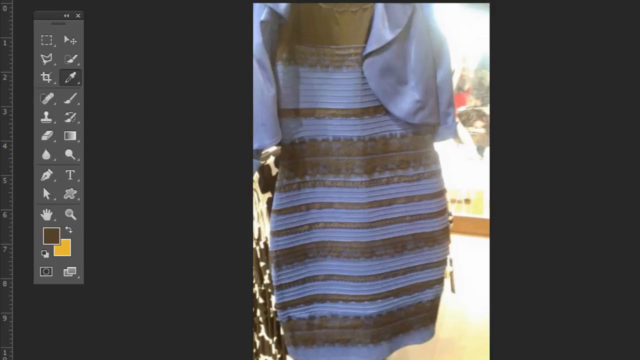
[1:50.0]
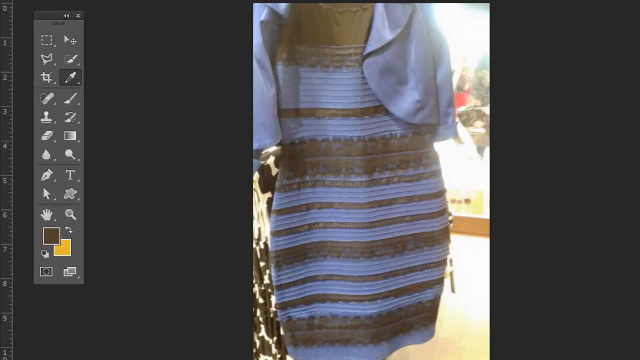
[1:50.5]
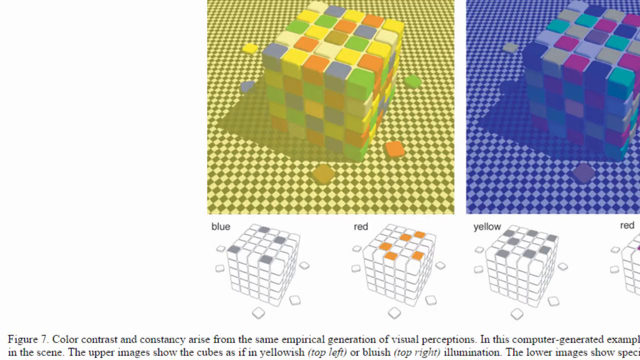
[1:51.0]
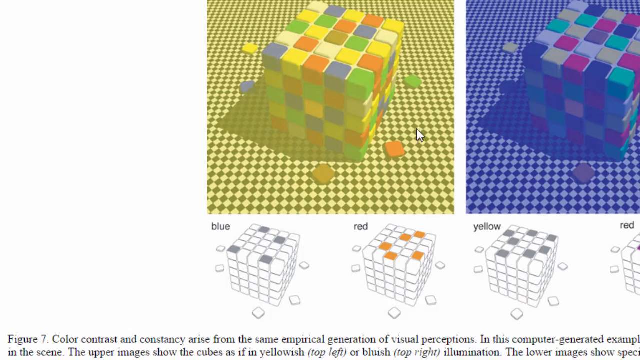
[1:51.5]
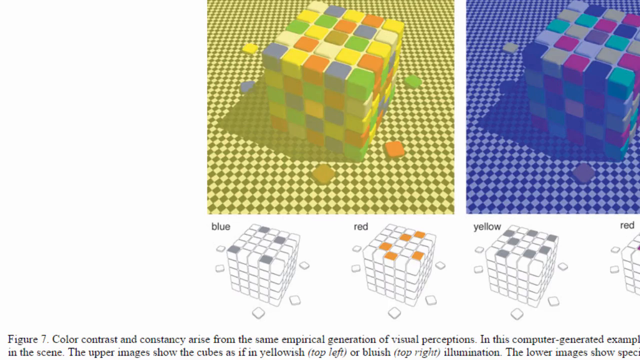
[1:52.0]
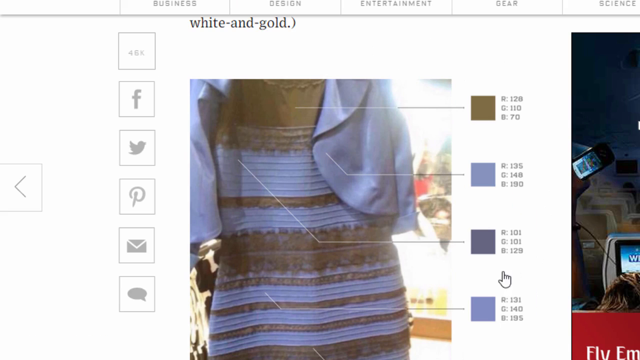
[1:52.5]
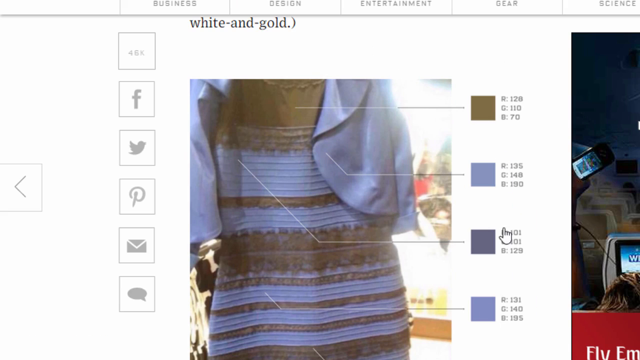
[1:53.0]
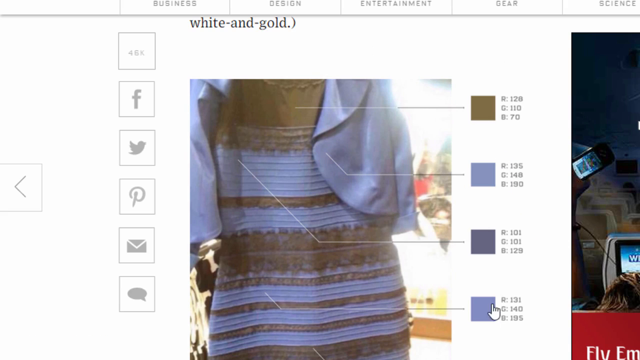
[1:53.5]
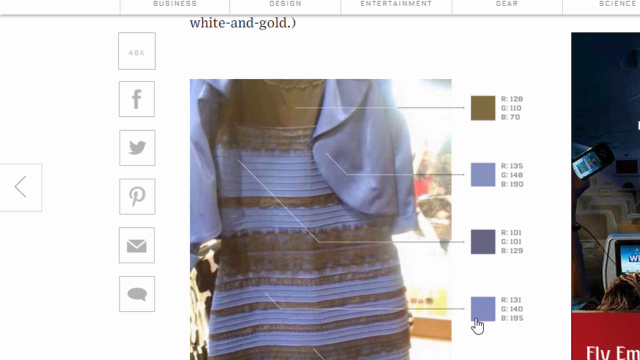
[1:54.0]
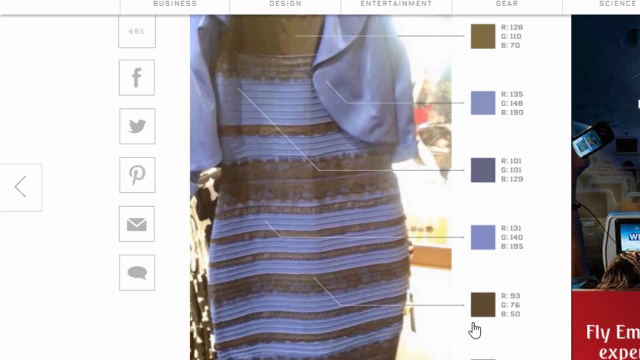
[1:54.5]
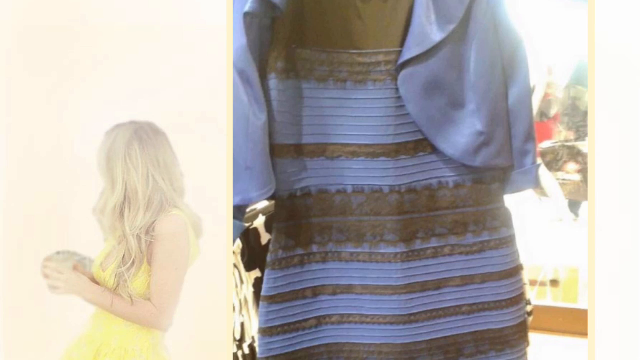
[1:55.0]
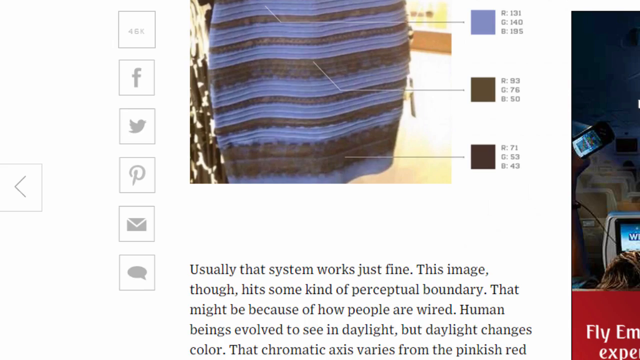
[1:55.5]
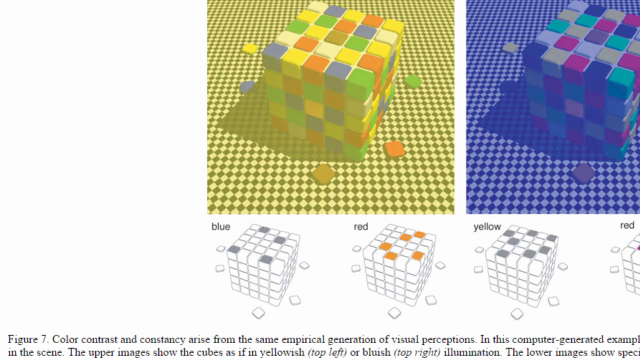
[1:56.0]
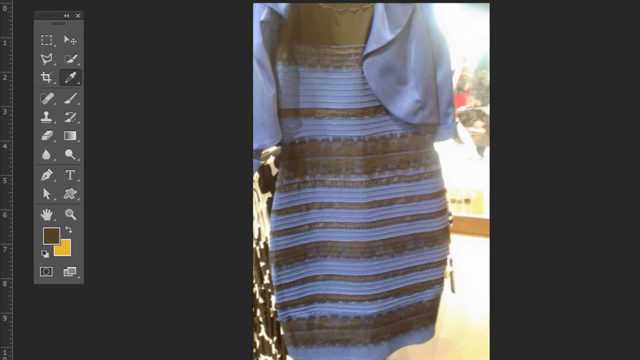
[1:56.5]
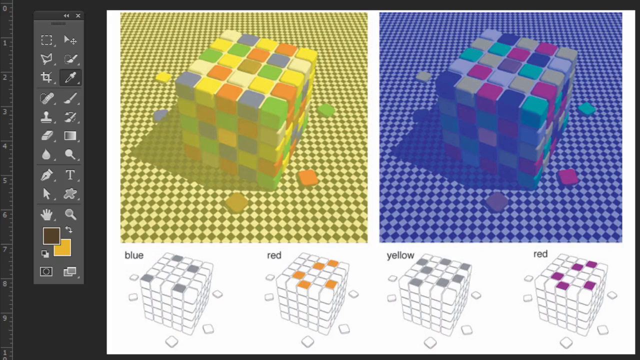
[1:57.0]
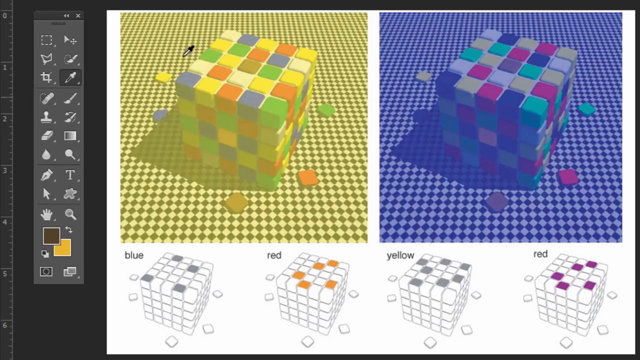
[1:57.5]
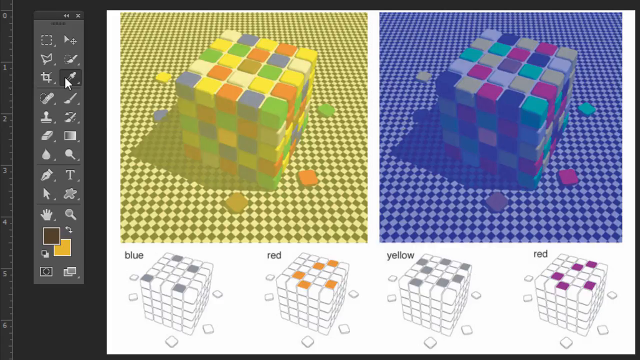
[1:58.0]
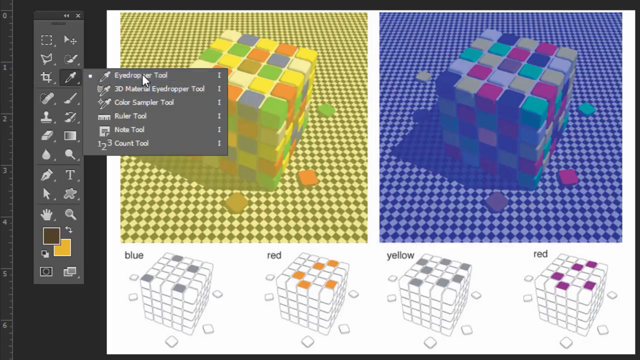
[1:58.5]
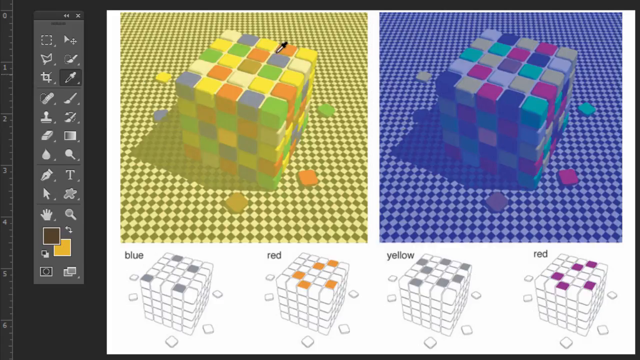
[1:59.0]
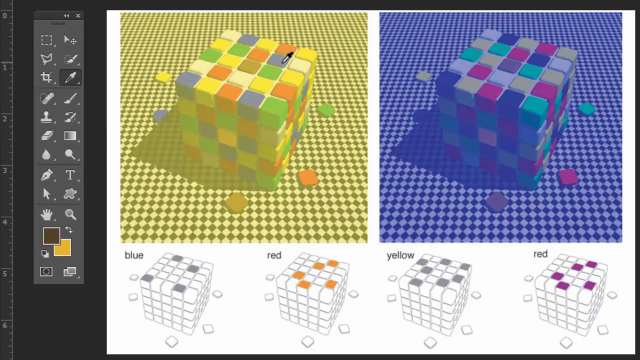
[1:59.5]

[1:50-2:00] The Photoshop window remains, with the tools open on the left and the color selector tool in use. The dress is in the middle, where brown was just selected. The view then quickly changes between many images, including the one with the Rubik's Cubes, diagrams and yellow and blue color overlays. It then goes to another website, apparently the Wired website, which shows color codes for different parts of the dress and how they vary due to light. It then returns to the pictures of the Rubik's Cubes in Photoshop, switches back to the eyedropper tool and hovers over the red square on the yellow diagram.